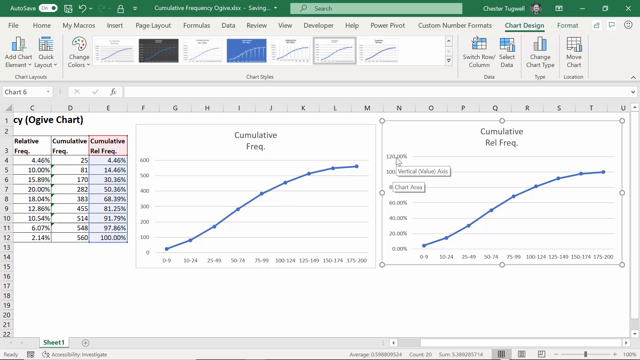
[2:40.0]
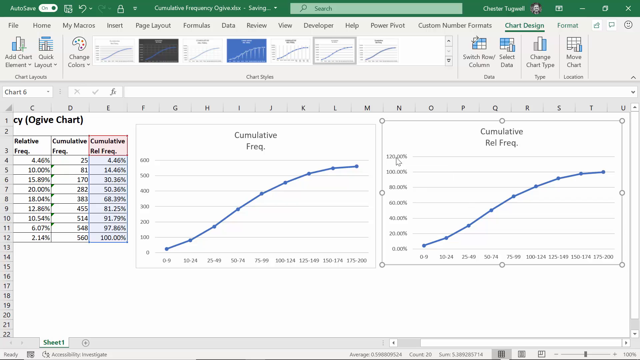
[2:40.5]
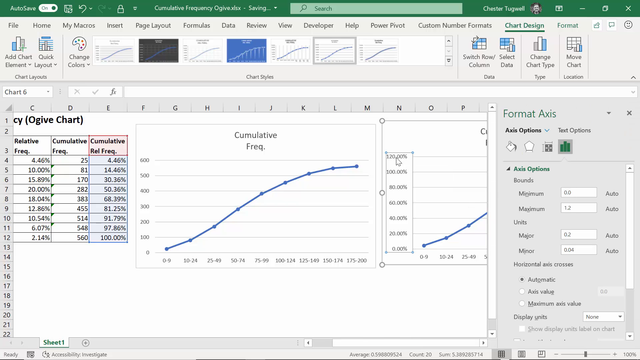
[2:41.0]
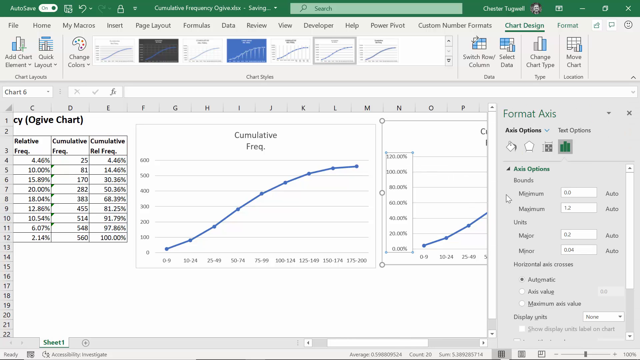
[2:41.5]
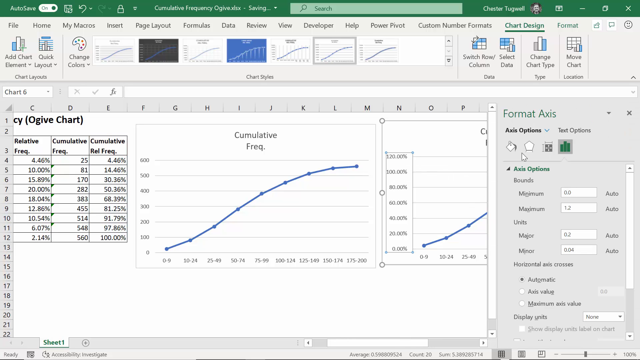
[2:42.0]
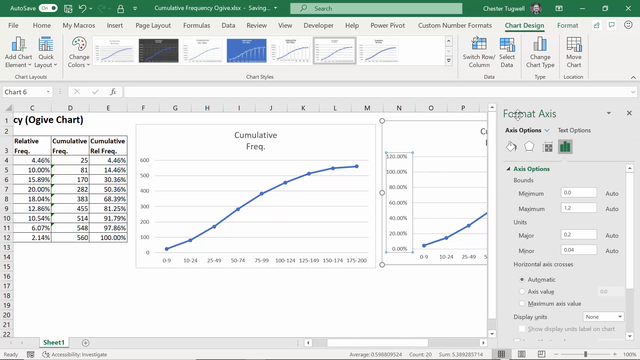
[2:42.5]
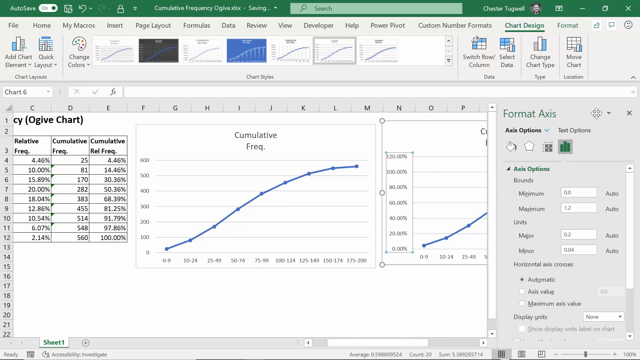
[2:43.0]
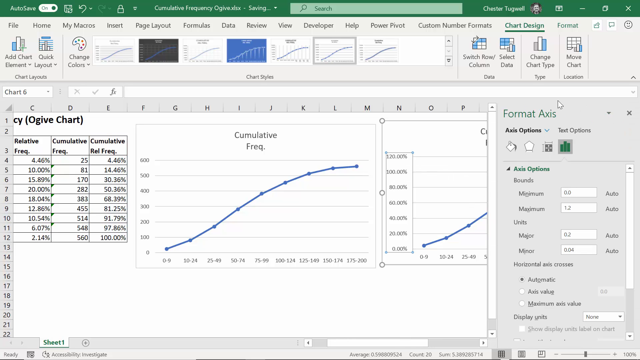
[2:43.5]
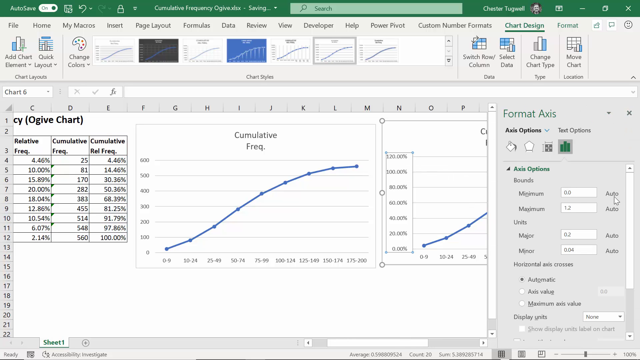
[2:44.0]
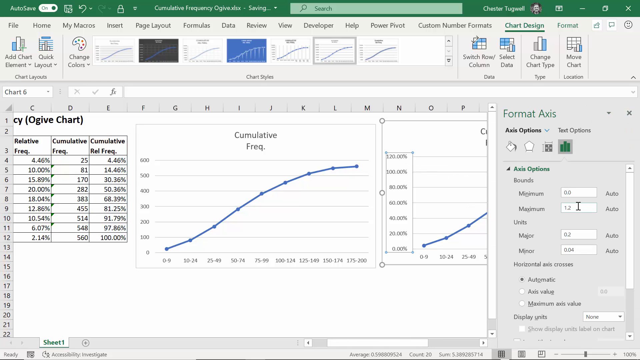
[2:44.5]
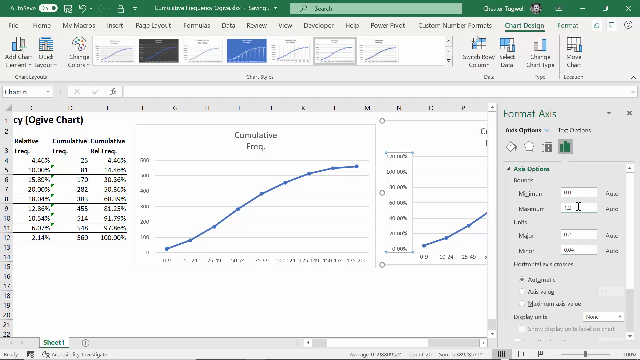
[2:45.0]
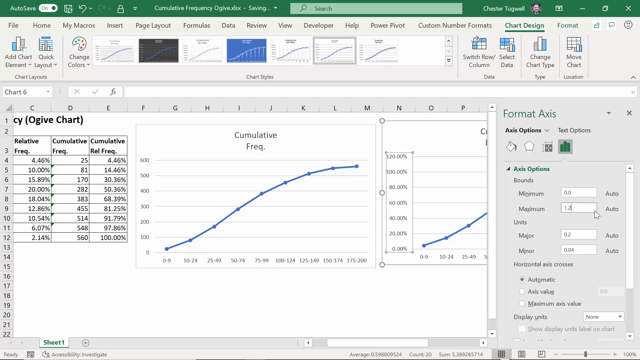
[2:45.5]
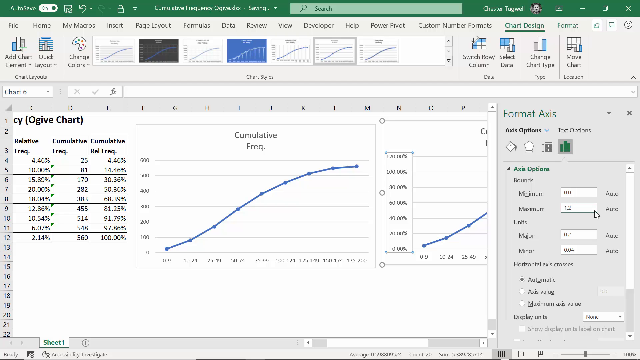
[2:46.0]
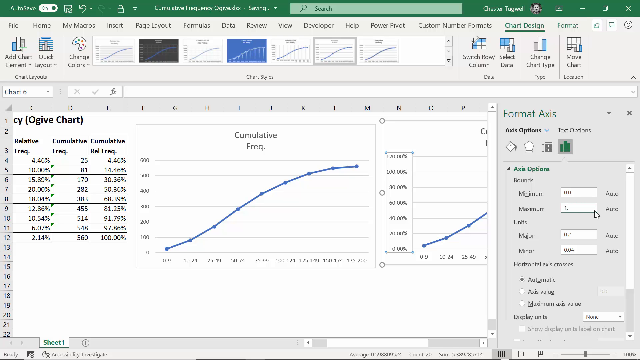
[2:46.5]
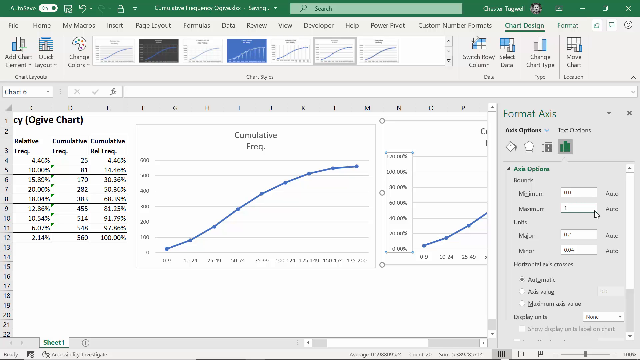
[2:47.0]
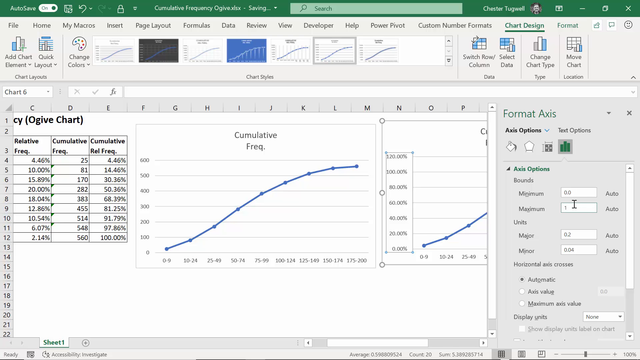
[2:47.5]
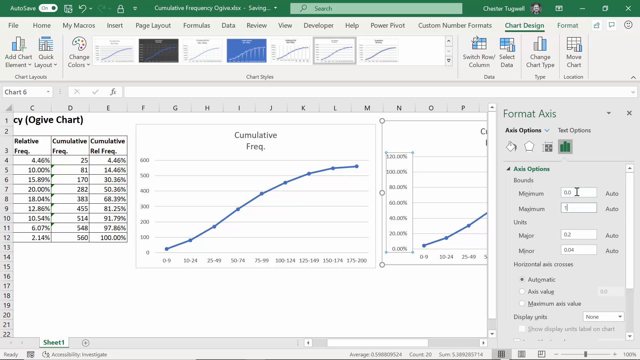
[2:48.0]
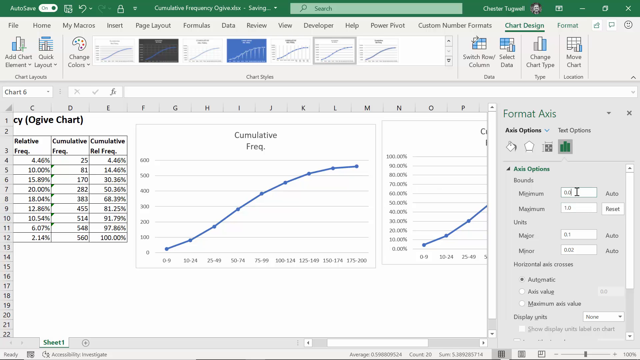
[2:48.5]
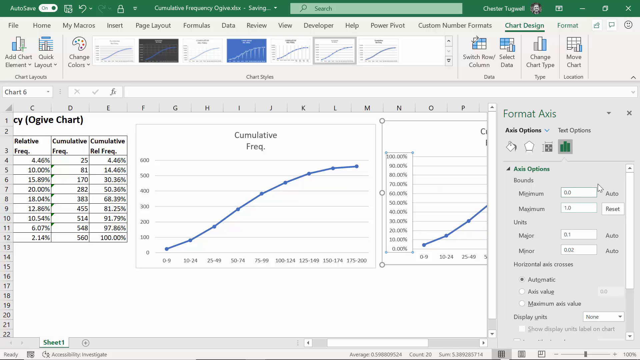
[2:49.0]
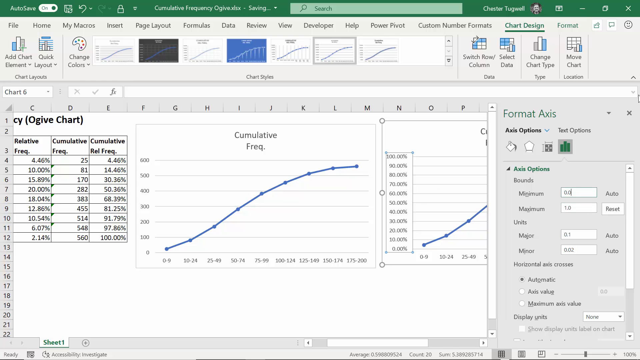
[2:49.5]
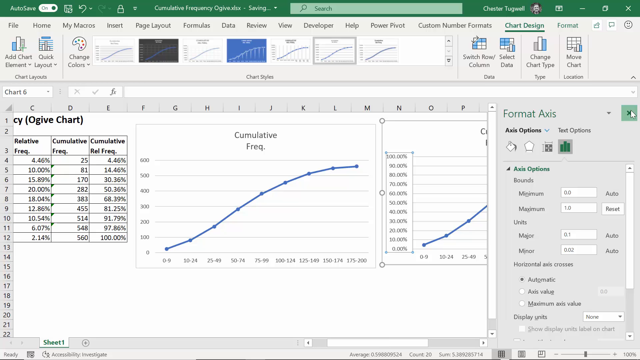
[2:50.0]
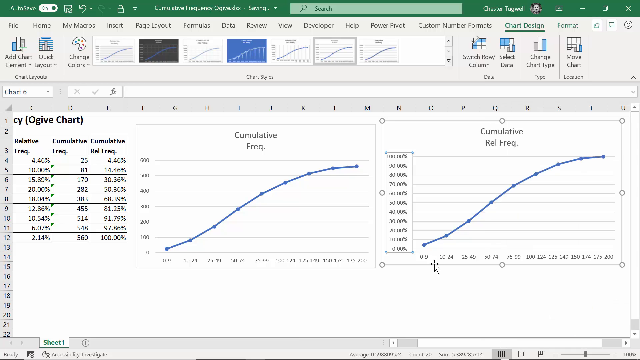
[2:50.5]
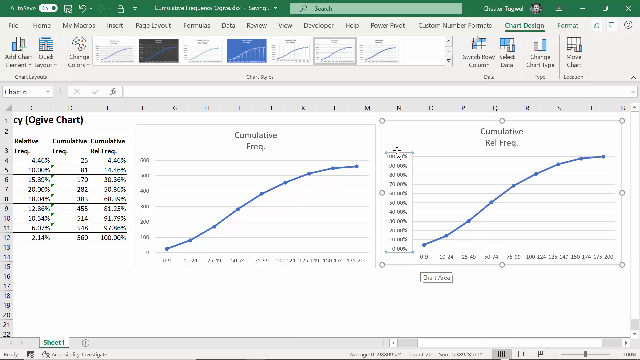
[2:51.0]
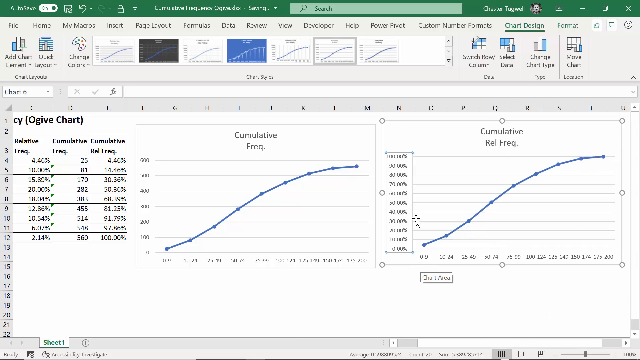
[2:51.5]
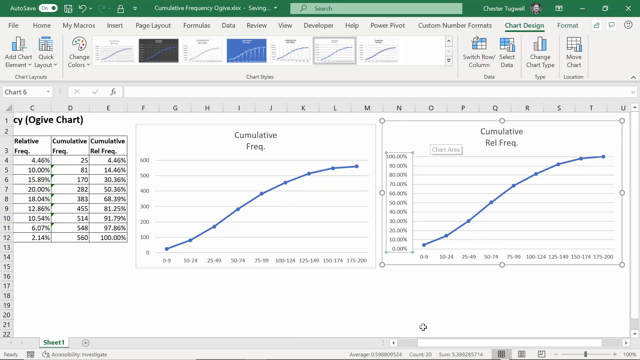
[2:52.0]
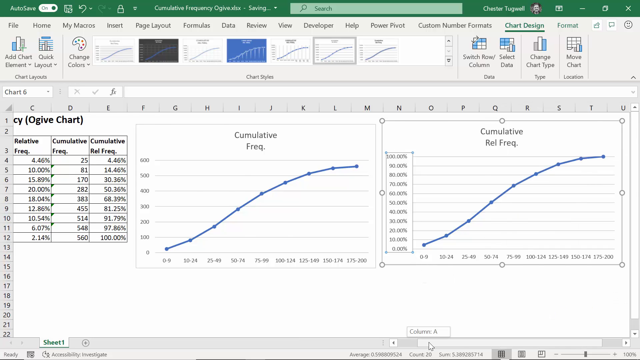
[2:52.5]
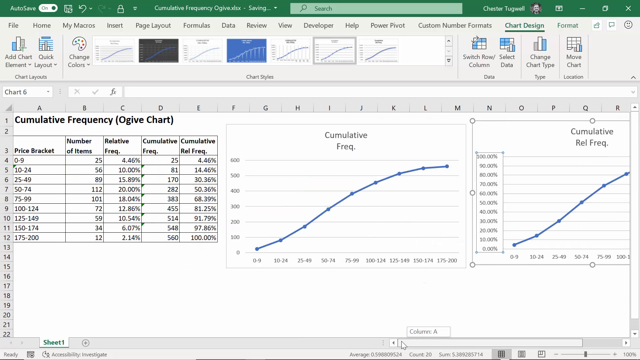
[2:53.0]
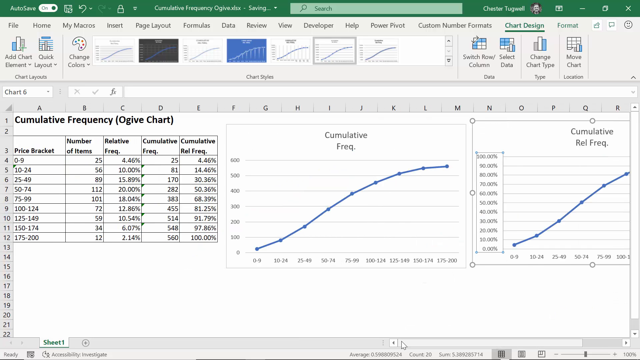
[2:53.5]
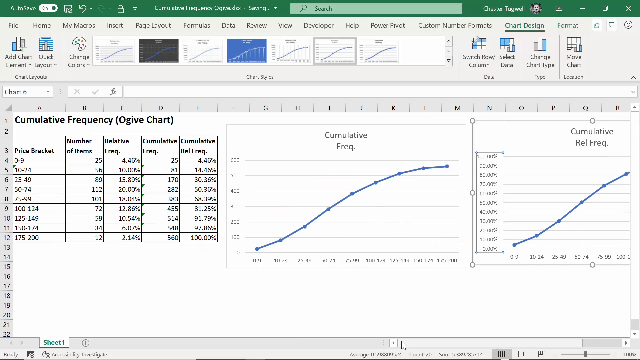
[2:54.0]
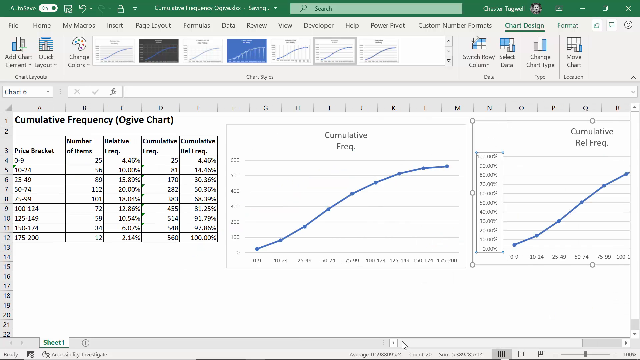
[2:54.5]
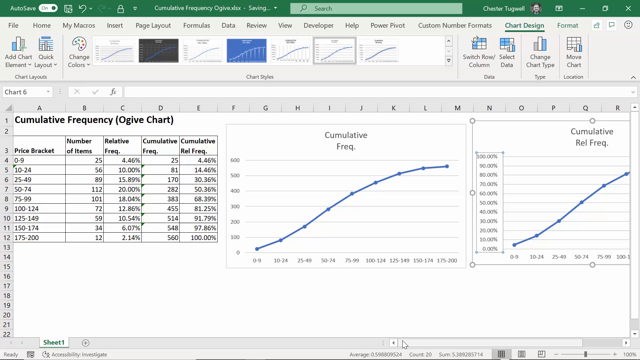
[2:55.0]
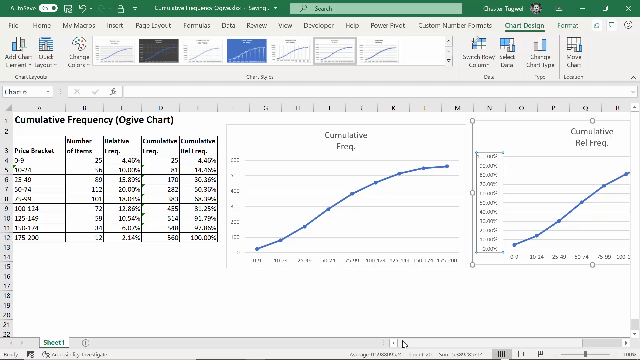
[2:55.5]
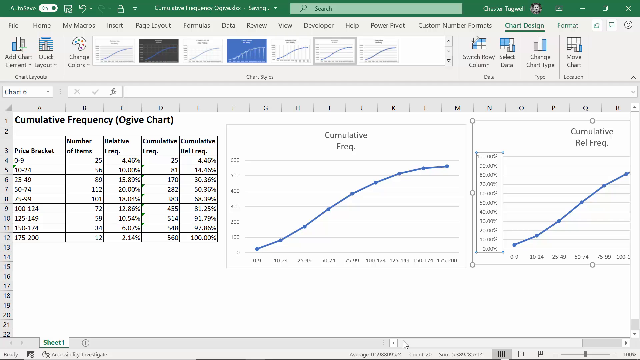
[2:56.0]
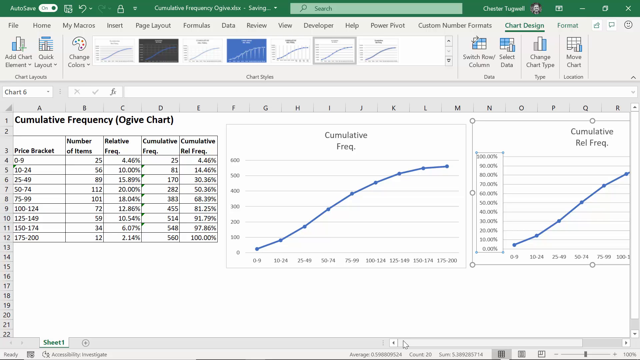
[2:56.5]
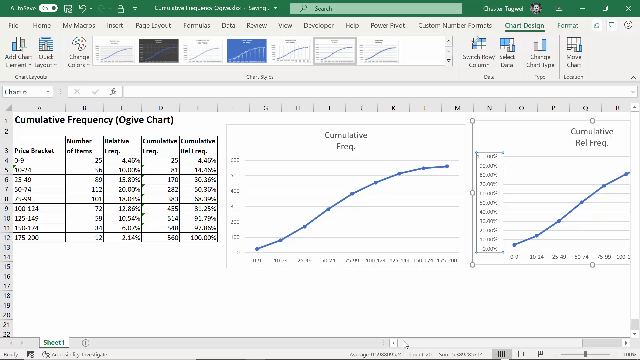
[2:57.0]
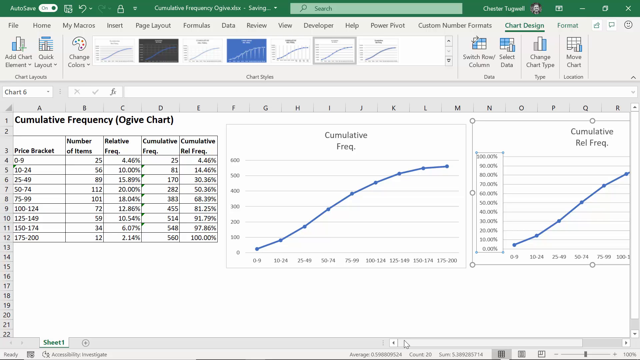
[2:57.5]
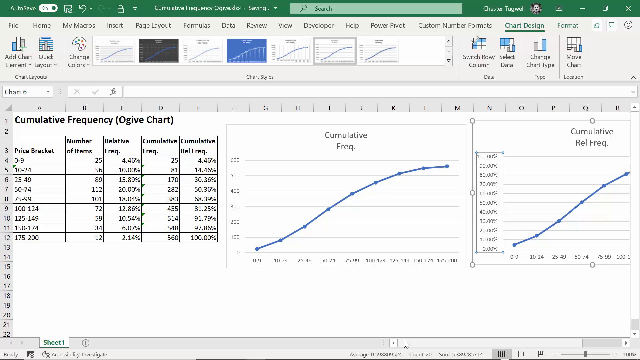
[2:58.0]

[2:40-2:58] The person selects the percentages on the left of the cumulative REL frequency chart, and all the percentages become selected. A format axis panel opens, and the person changes the format, adjusting the maximum and the minimum so that the numbers are closer to each other and the chart is clearer.